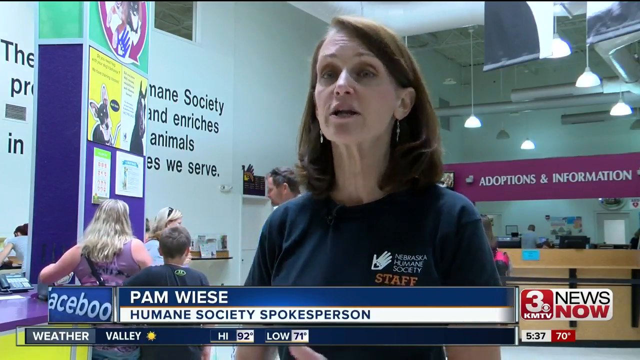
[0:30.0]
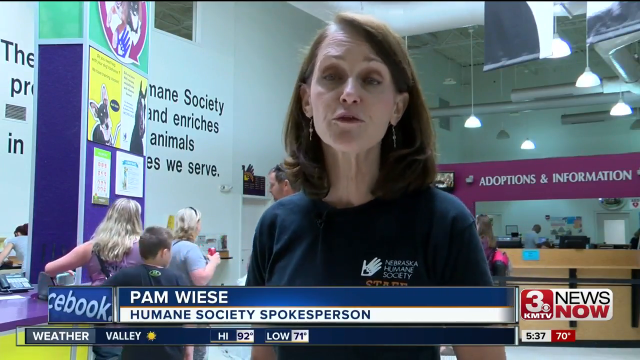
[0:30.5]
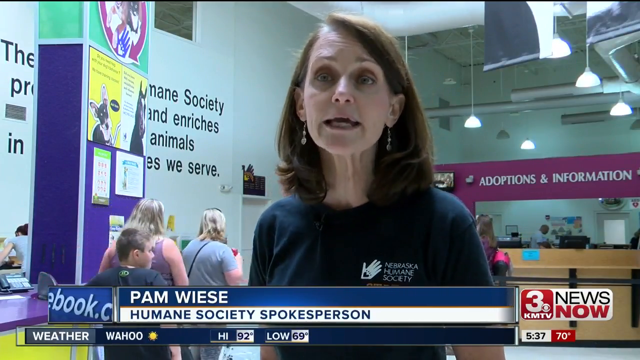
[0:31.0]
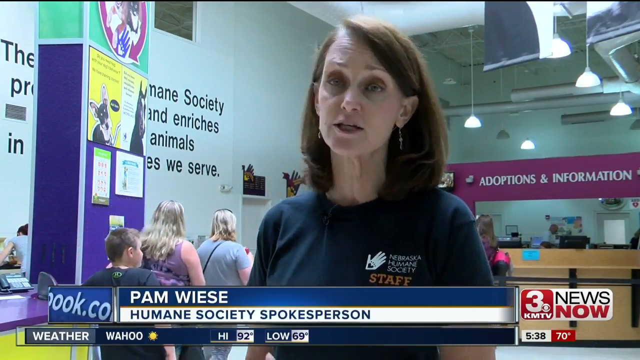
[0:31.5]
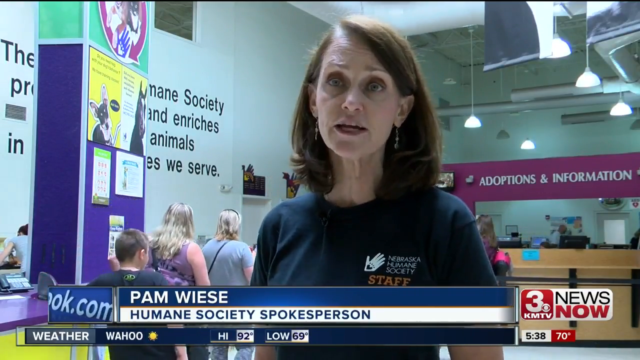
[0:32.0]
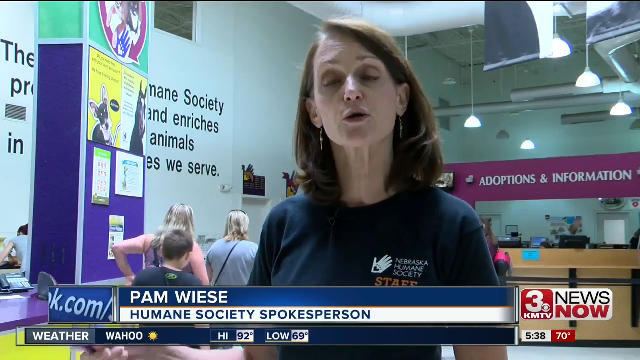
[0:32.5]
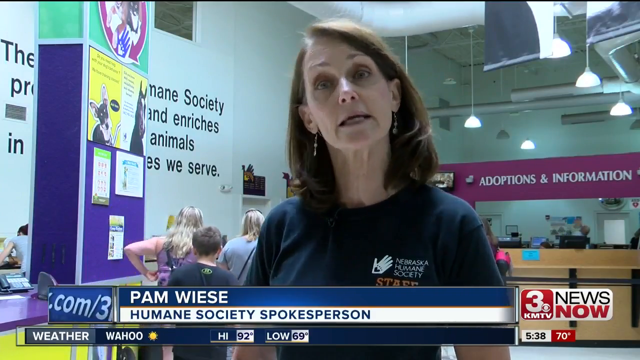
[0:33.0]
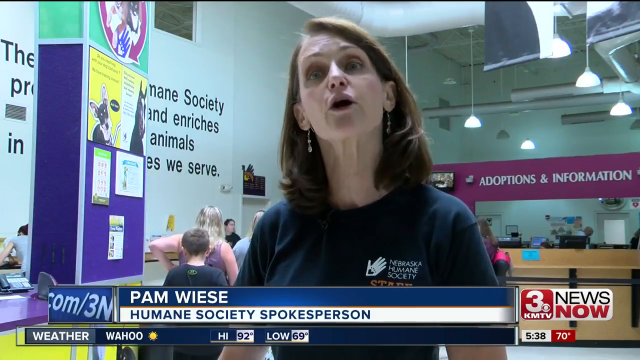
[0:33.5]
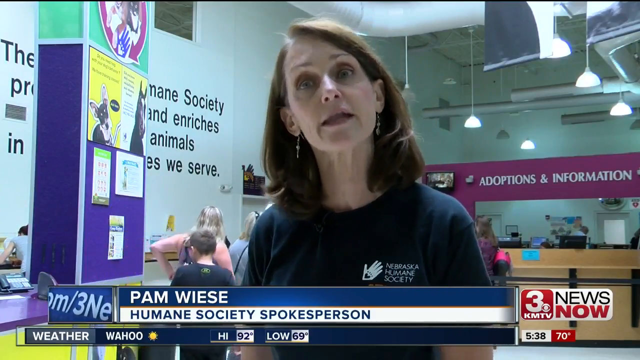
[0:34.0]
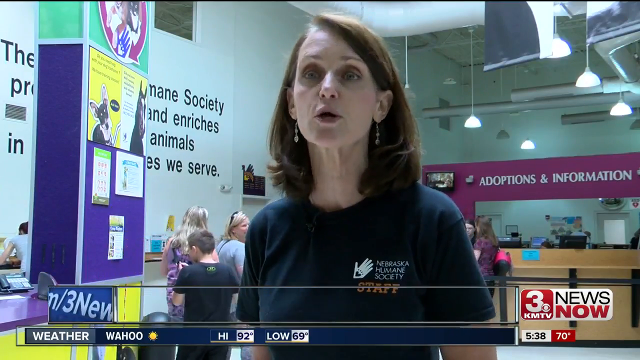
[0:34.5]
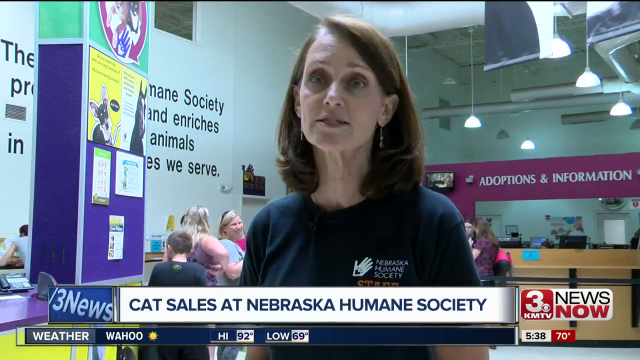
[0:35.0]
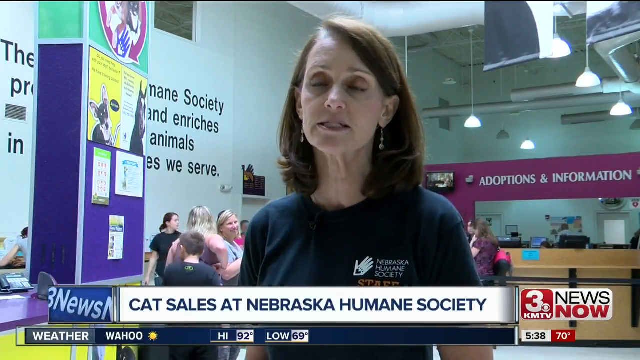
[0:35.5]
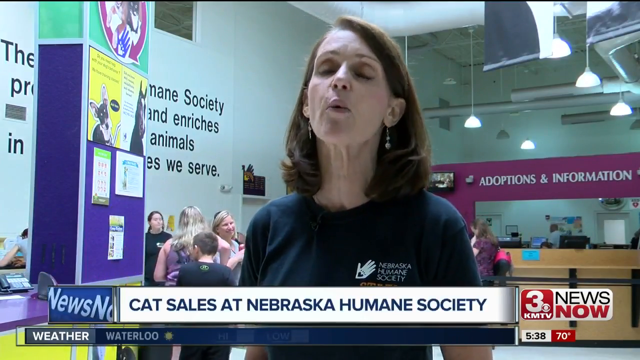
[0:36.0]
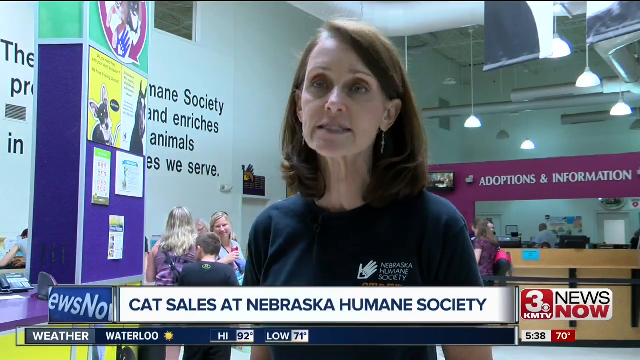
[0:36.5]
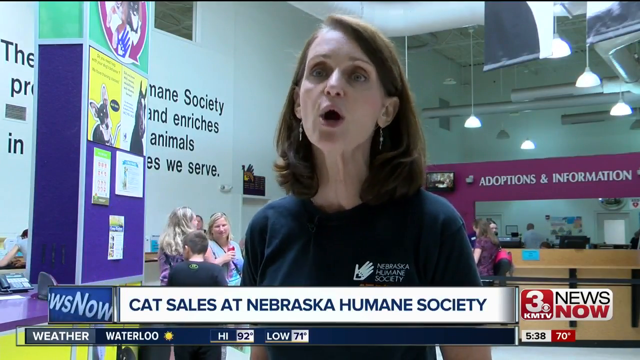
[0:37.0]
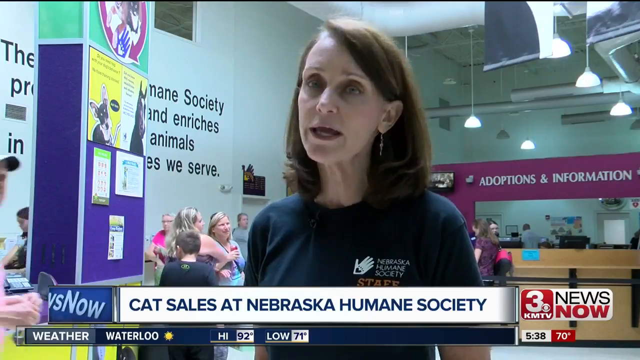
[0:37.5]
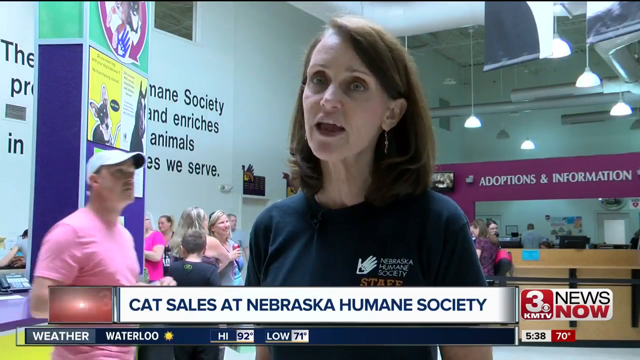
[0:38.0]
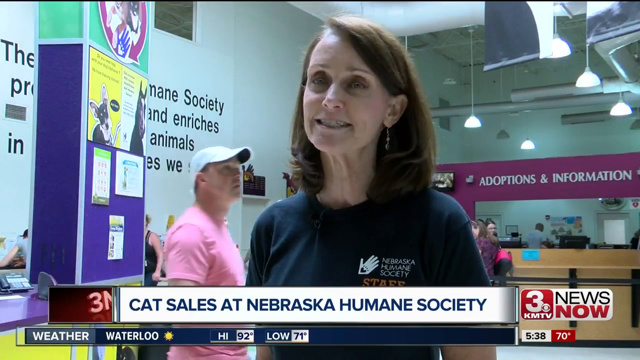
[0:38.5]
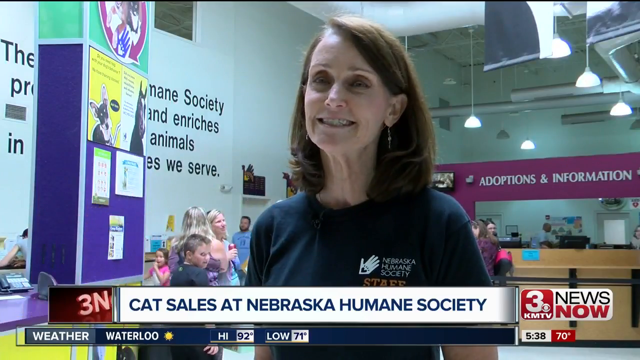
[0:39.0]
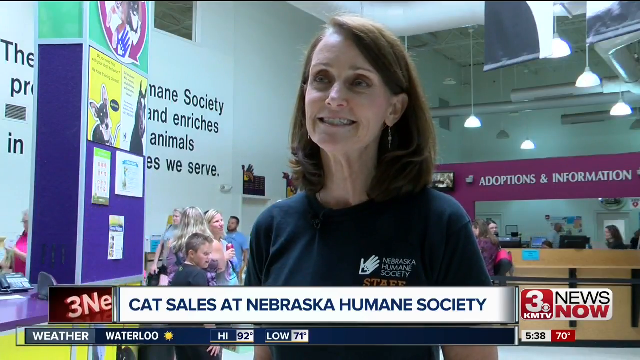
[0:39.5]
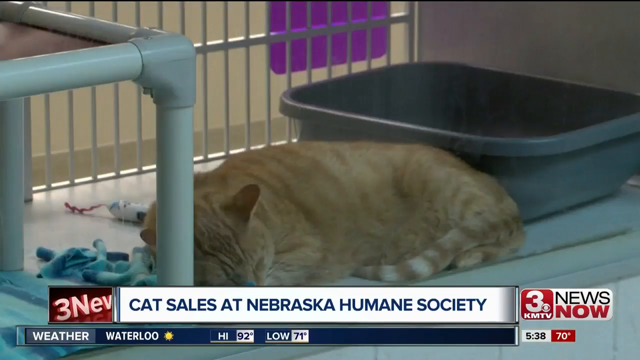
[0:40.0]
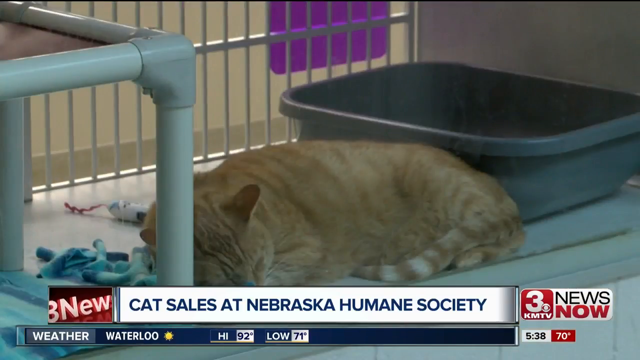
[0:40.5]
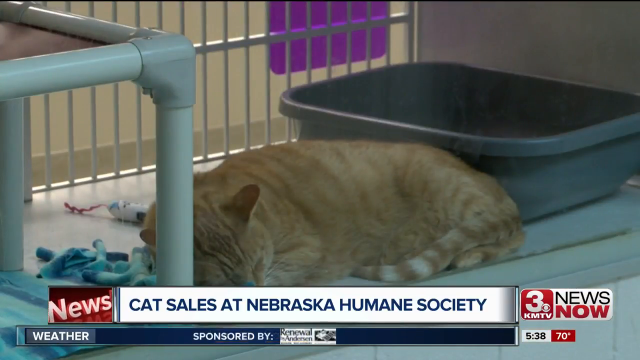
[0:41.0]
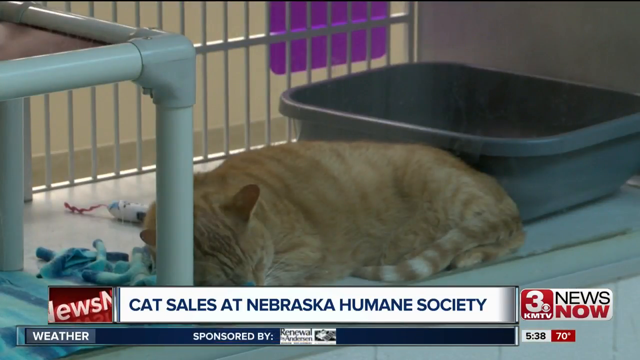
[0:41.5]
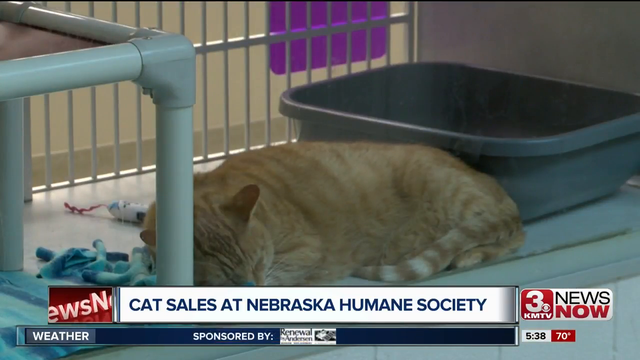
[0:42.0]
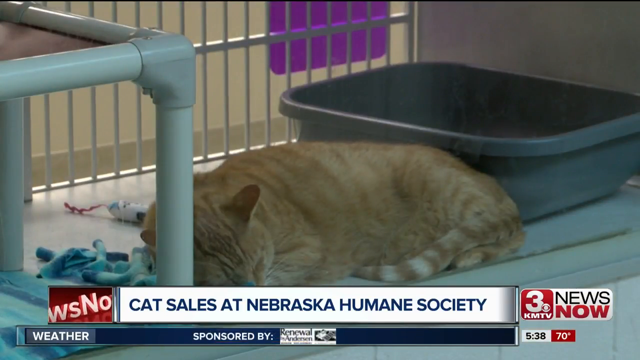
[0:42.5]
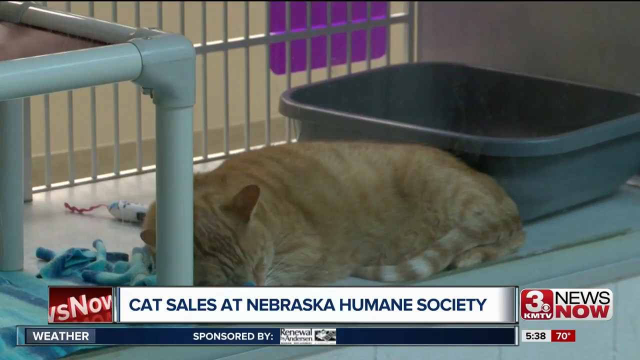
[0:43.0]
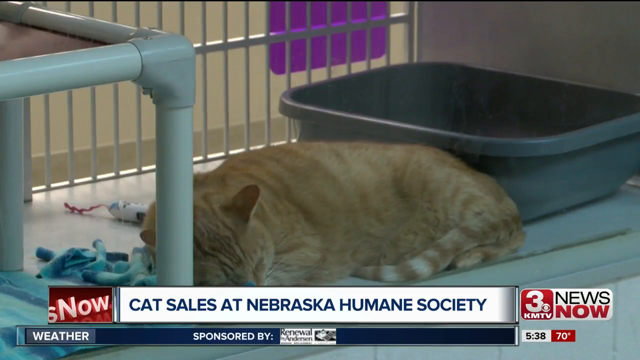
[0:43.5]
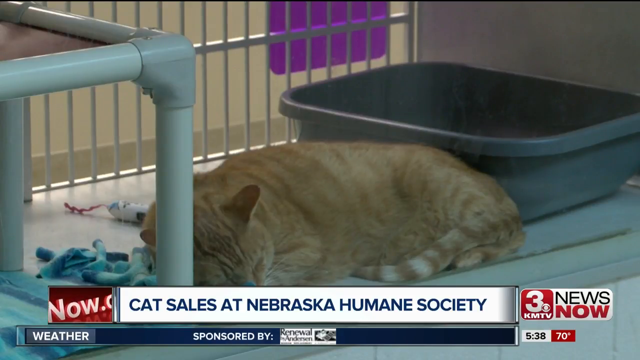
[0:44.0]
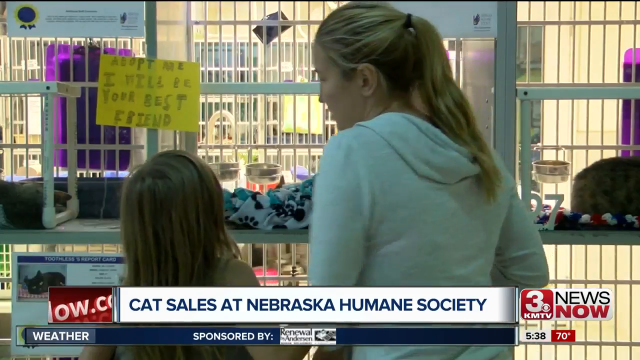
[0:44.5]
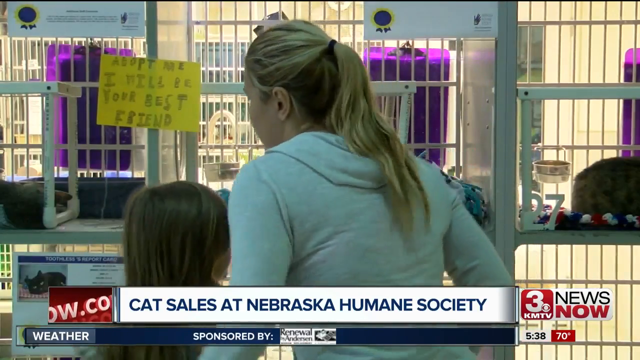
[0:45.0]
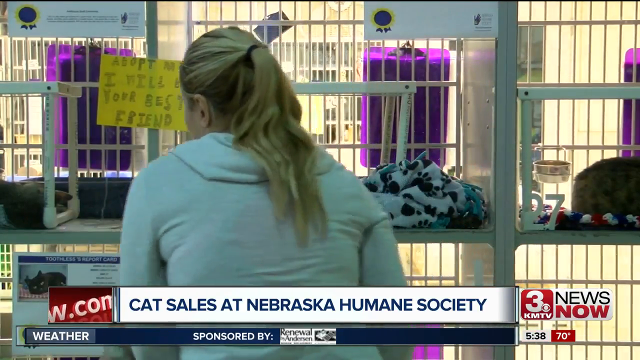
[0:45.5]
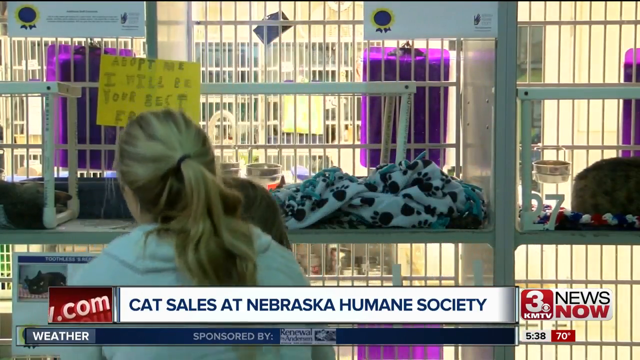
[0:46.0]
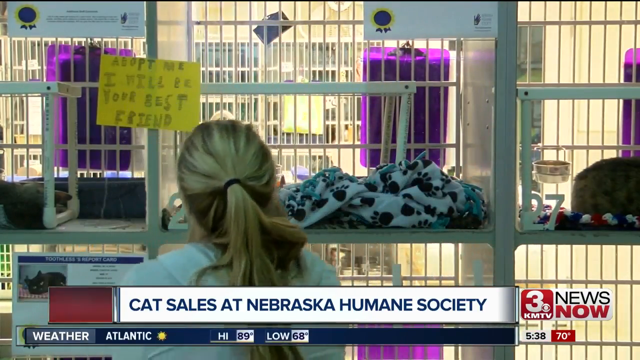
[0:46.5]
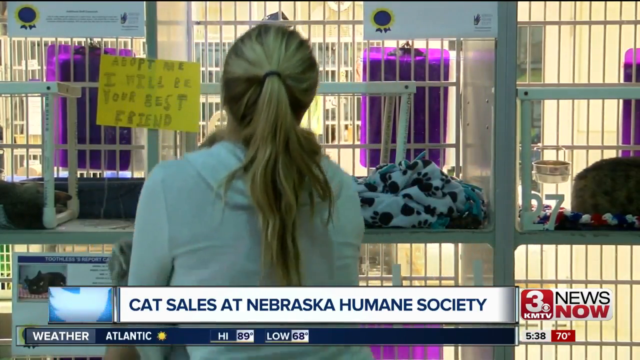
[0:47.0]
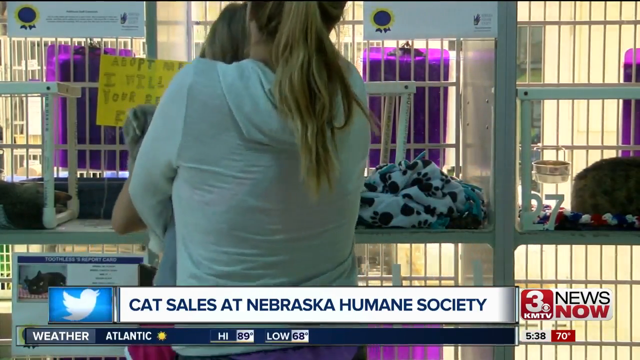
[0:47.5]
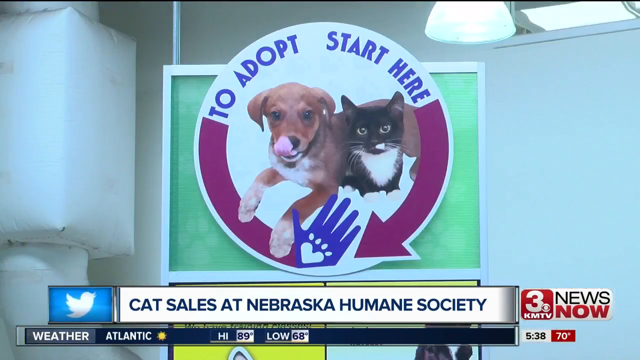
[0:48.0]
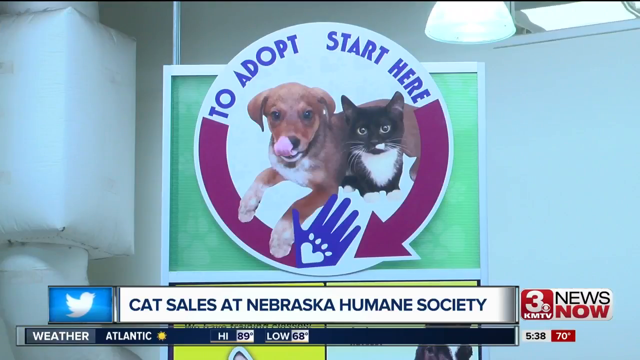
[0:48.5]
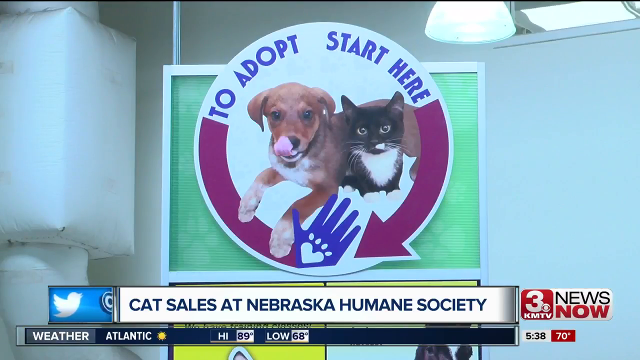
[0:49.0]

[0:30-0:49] A woman stands in the middle of the frame facing the camera, being interviewed. A blue and white banner at the bottom reads "Pam Wise, Humane Society spokesperson", and the bottom right reads "3KMTV News Now", "537" and "70 degrees". She has brown hair down to her shoulders, wears earrings, and has a blue shirt with "Nebraska Humane Society" on the top left over her chest and orange text reading "staff" underneath. In the background, around four or five people stand around talking to each other and standing in a line. A receptionist desk is at the bottom right of the background, with "Adoptions and Information" in white above it over what looks like a purple background. The woman talks, moving her head around and shaking it a lot. The banner at the bottom then becomes white and reads "Cat Sales at Nebraska Humane Society". A man in a white baseball hat and a pink shirt walks from left to right in the background. The woman stops talking and smiles, and the video fades out and returns to what looks like a view inside a glass case, where a yellow tabby cat is sleeping. On the left side, PVC pipes make up a platform for the cat. The video transitions to what looks like a blonde girl and a very little girl standing in front of the glass cases, facing away from the camera. Finally, the video shows a circular white sign with a purple arrow at the bottom and a dog and a cat in the middle: a brown dog lying down facing the camera, and a black cat with a white chest also facing the camera. Blue text at the top reads "To adopt, start here".